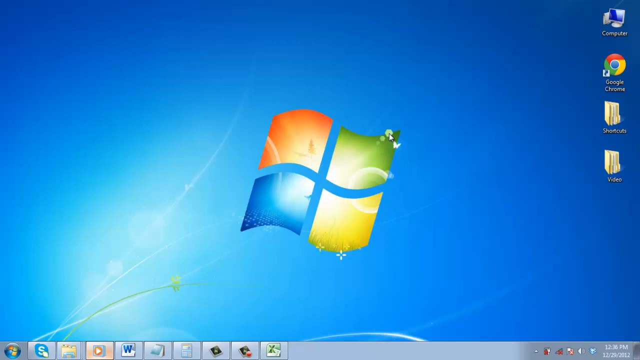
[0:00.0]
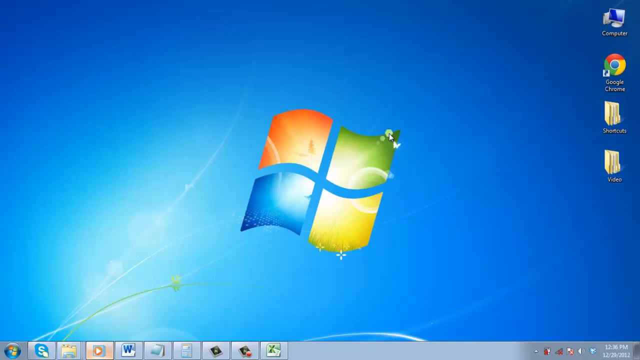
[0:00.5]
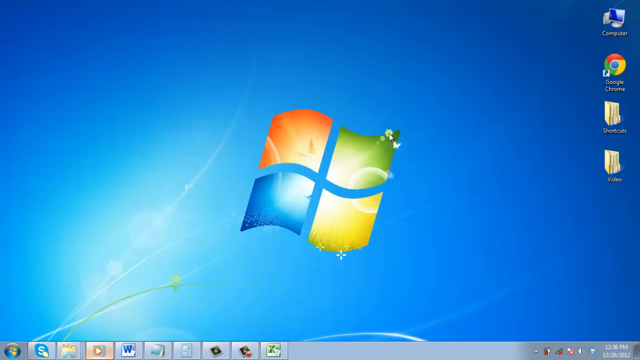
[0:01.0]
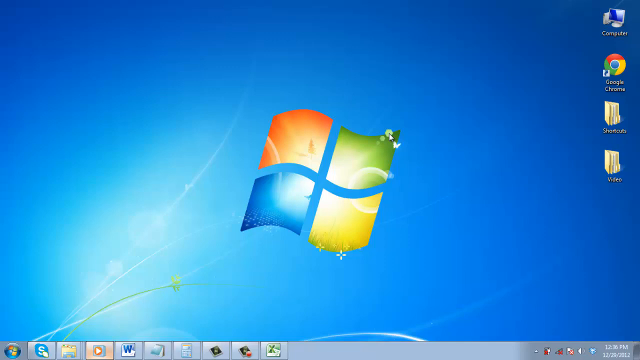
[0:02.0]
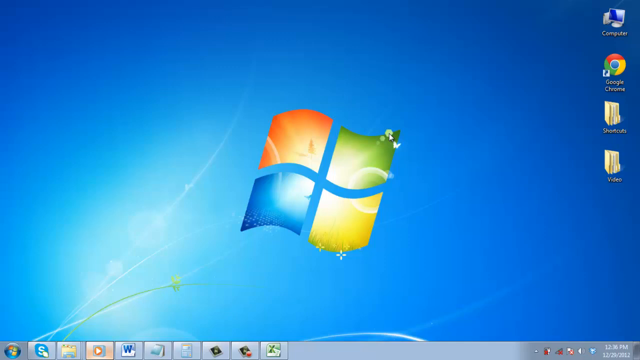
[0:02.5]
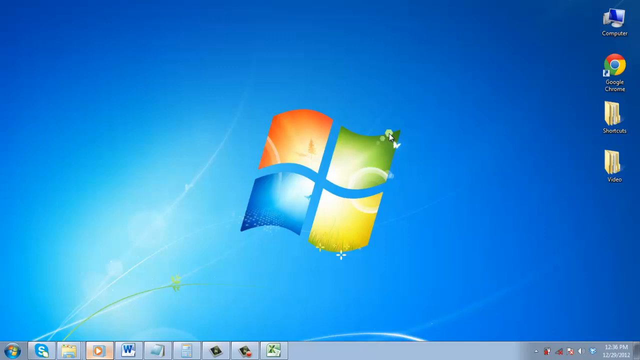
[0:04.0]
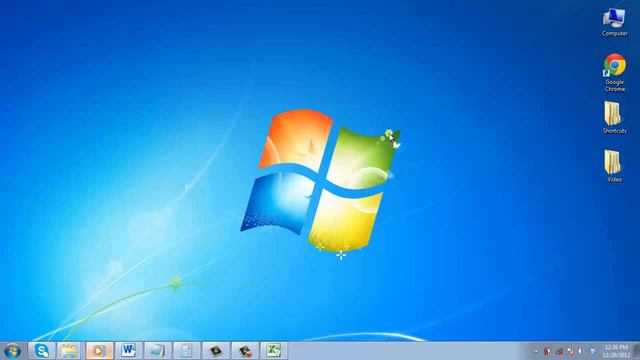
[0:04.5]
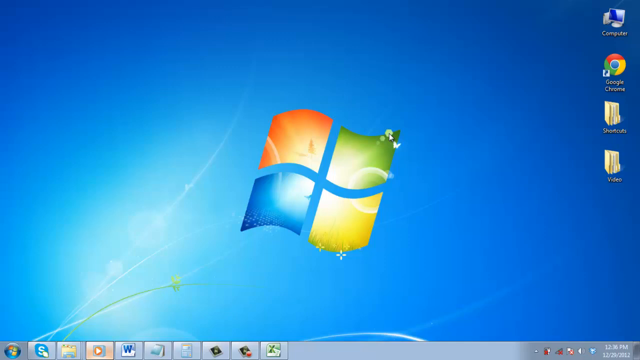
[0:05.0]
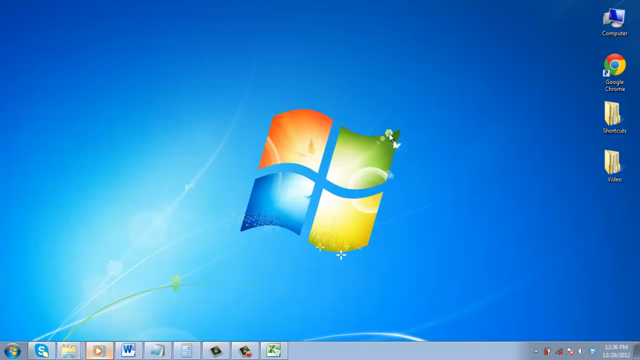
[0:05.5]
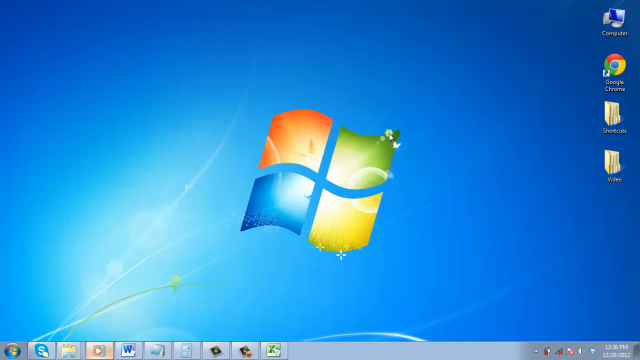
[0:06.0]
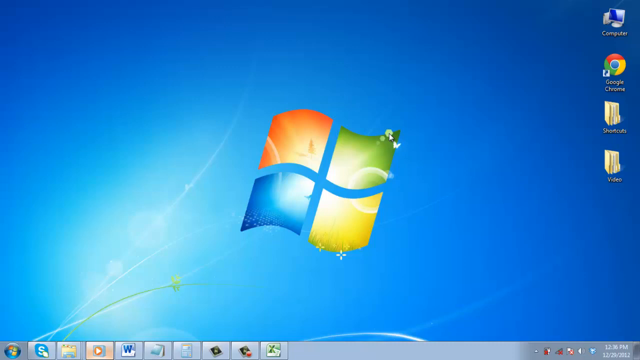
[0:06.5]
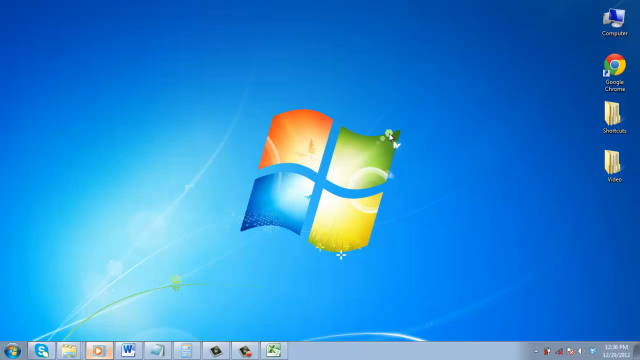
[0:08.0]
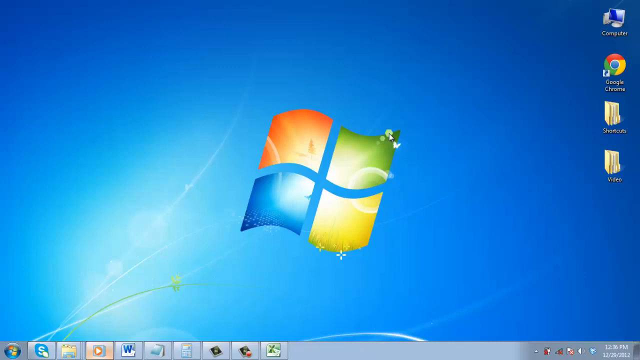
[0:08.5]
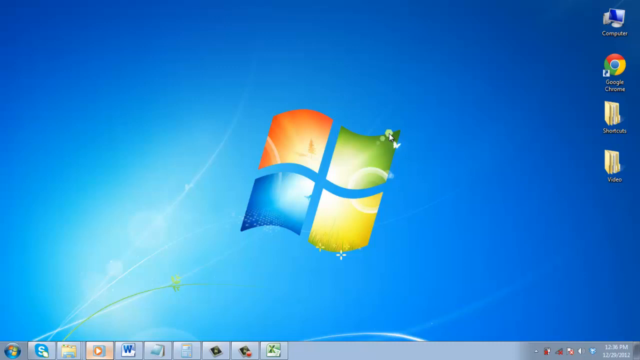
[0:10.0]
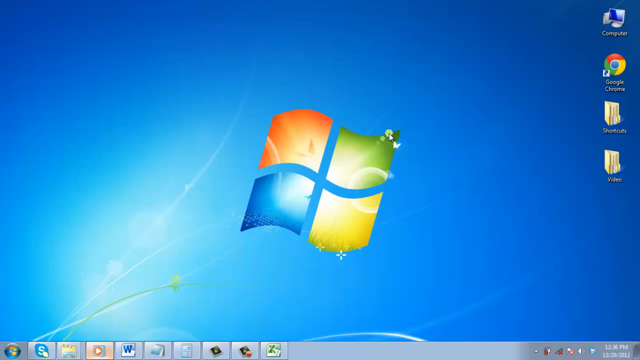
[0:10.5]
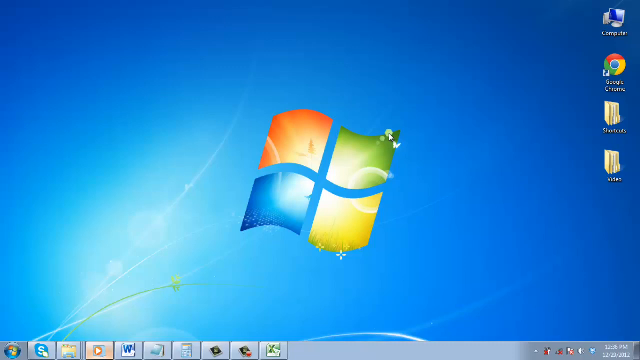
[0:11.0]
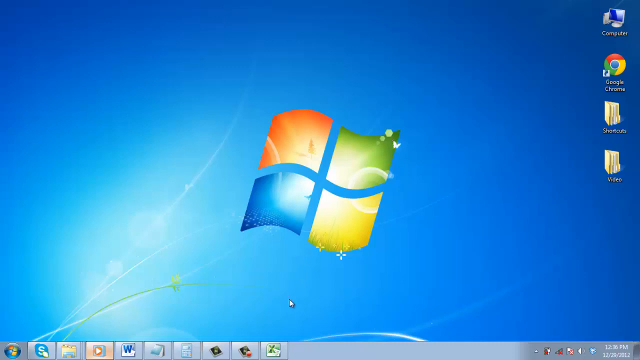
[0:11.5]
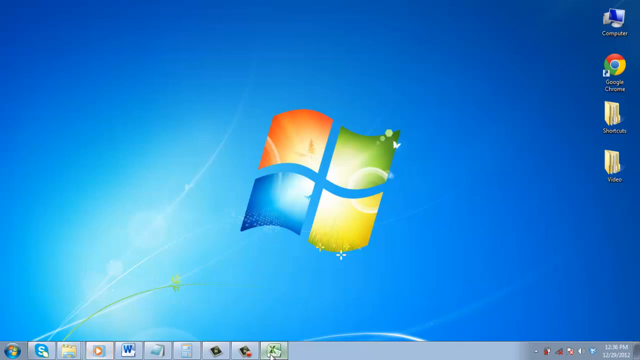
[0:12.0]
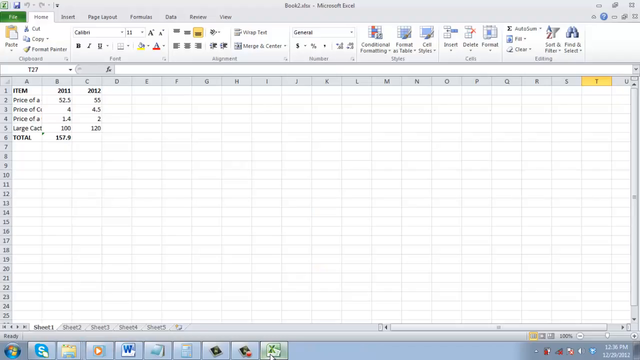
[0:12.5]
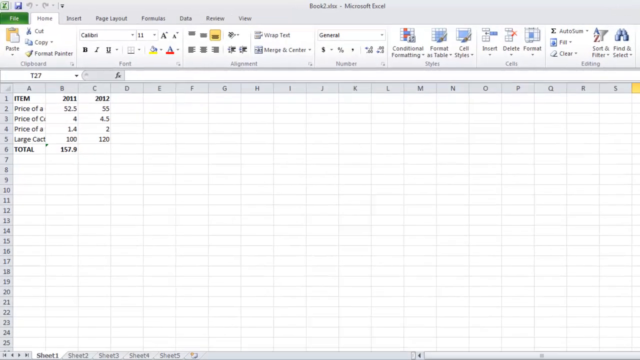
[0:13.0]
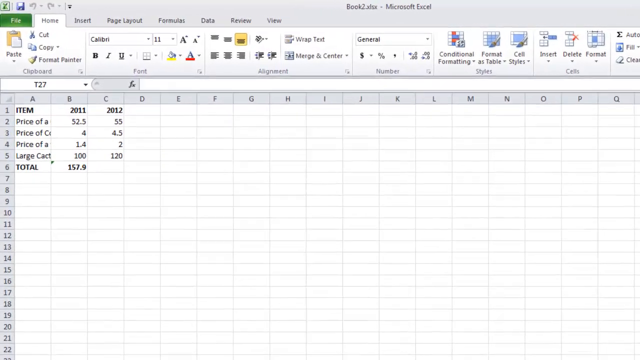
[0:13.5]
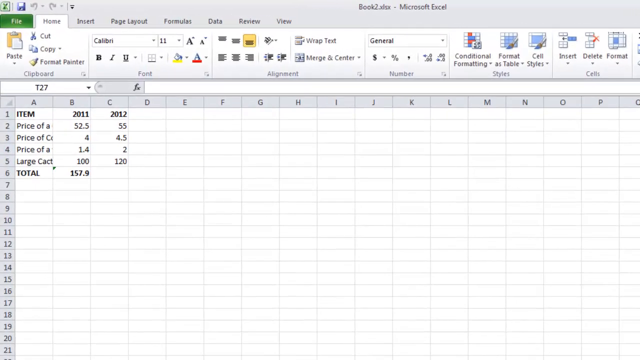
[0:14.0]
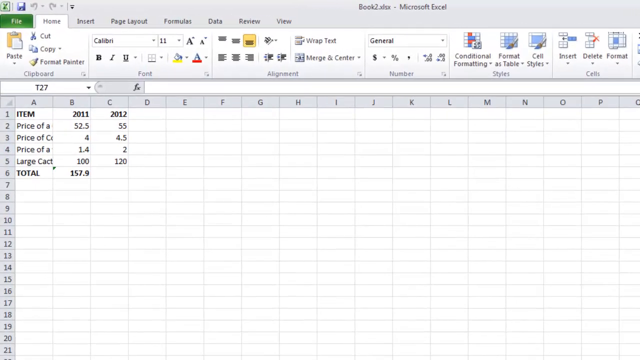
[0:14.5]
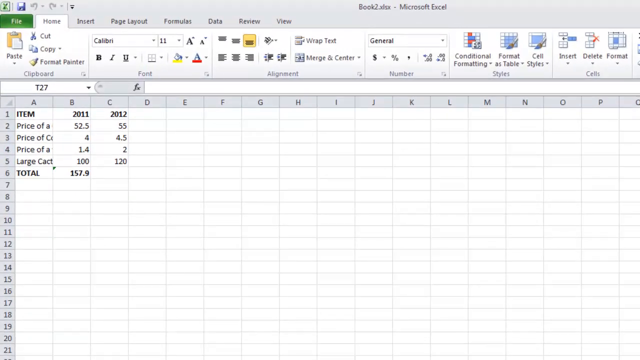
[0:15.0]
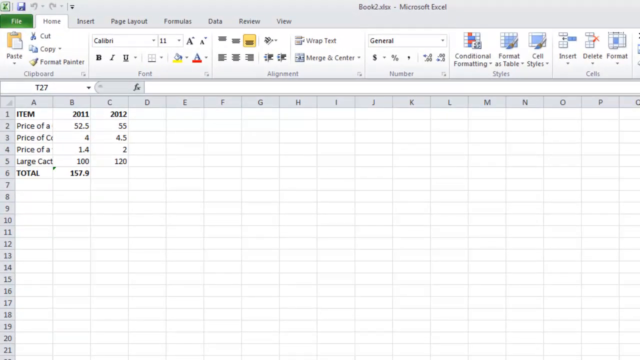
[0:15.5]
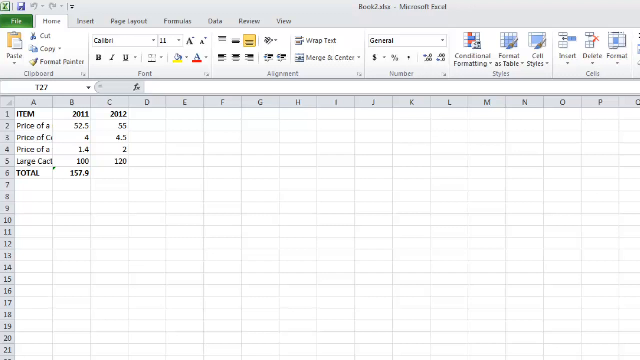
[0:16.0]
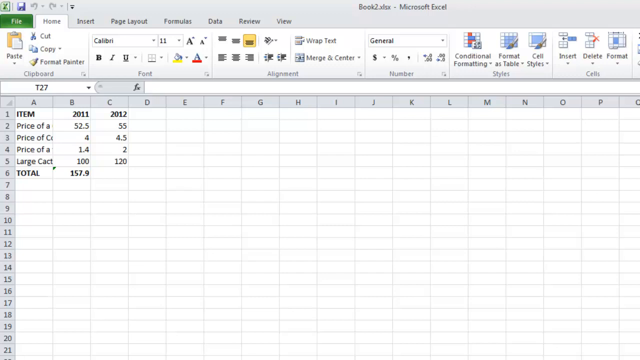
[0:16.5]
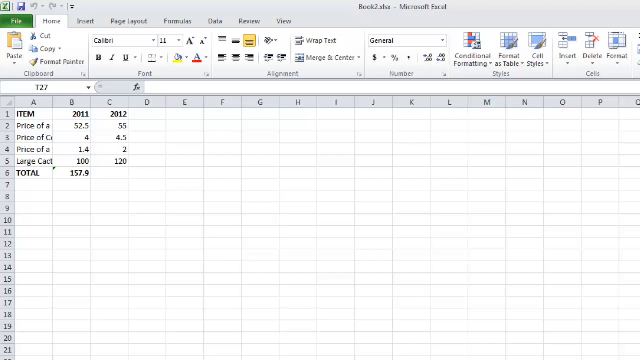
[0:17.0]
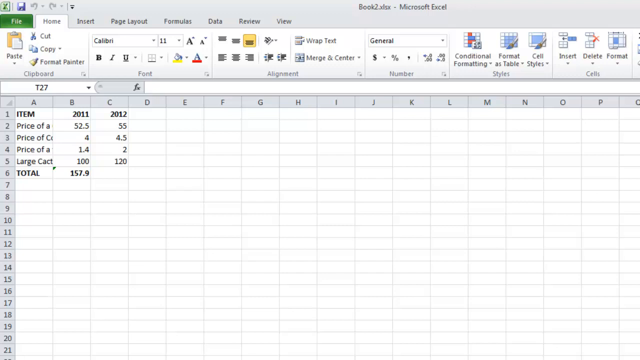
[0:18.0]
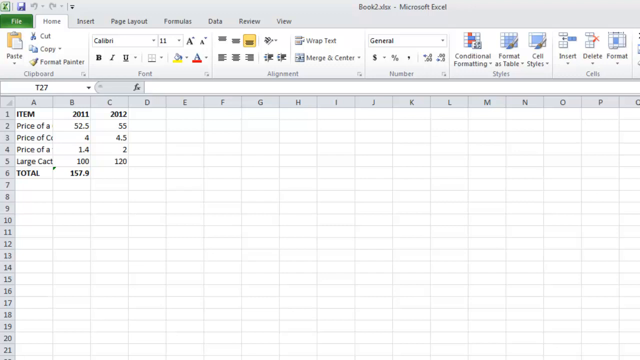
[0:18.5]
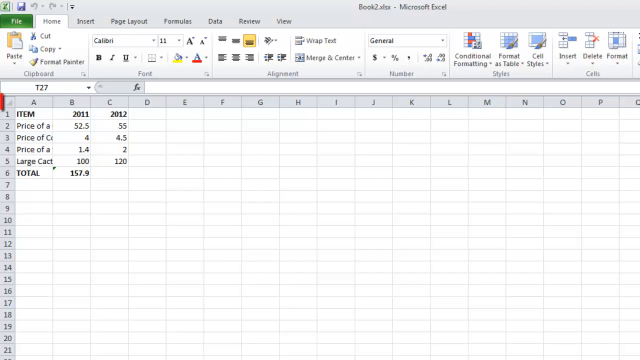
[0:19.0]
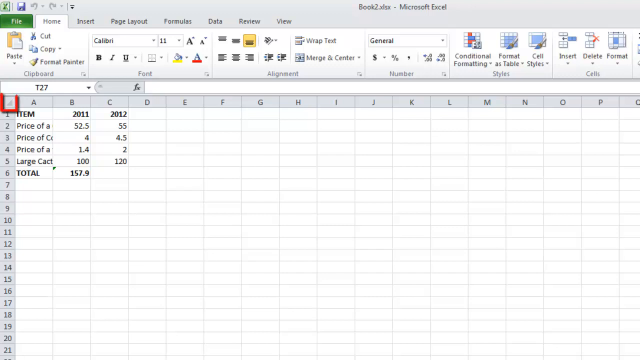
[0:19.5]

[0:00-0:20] A Windows desktop appears, a basic screen with the default background still showing the Windows logo along with the items that come with the computer. After a few seconds an Excel spreadsheet opens, listing items and their prices from 2011 and 2012, along with a total for 2011. The worksheet is named book2.abx.